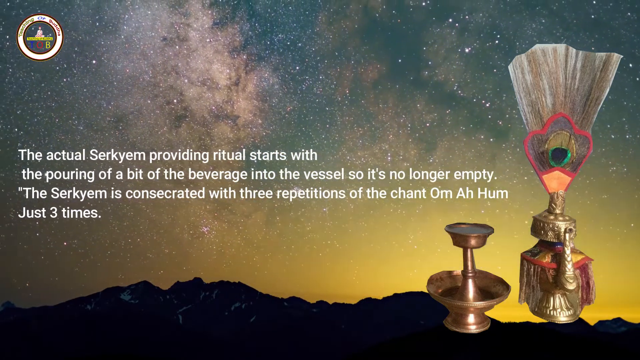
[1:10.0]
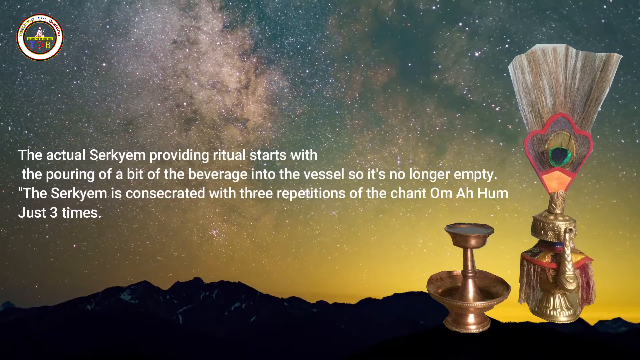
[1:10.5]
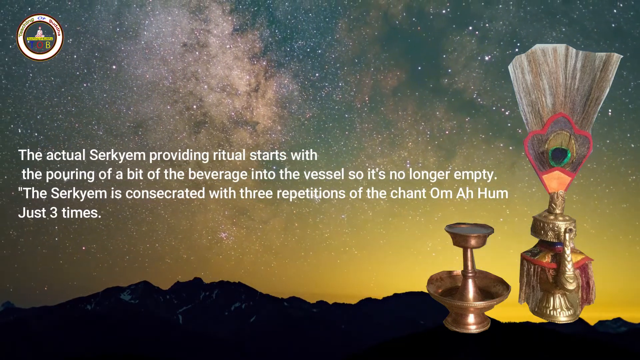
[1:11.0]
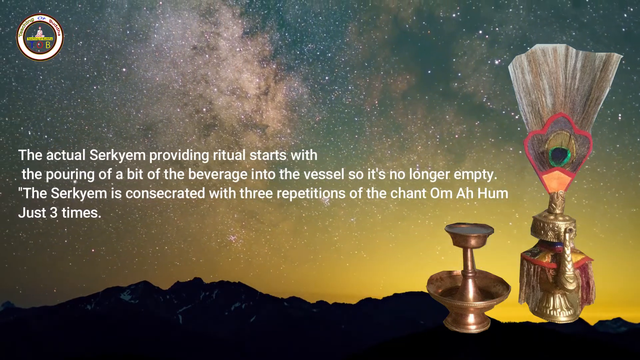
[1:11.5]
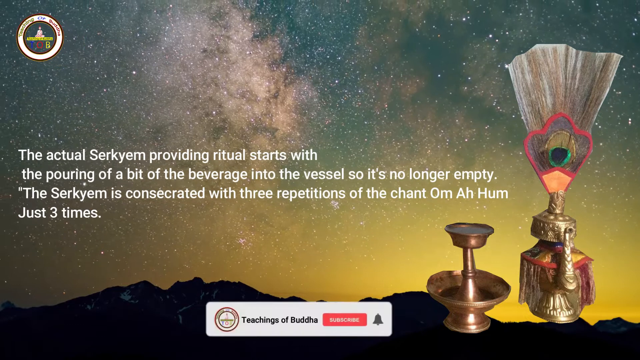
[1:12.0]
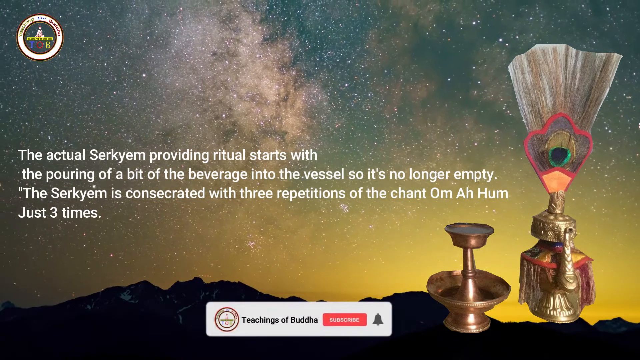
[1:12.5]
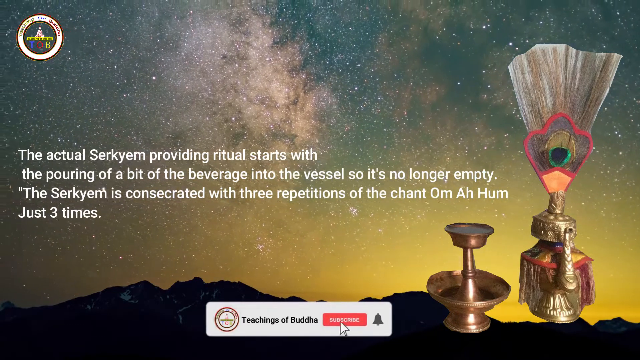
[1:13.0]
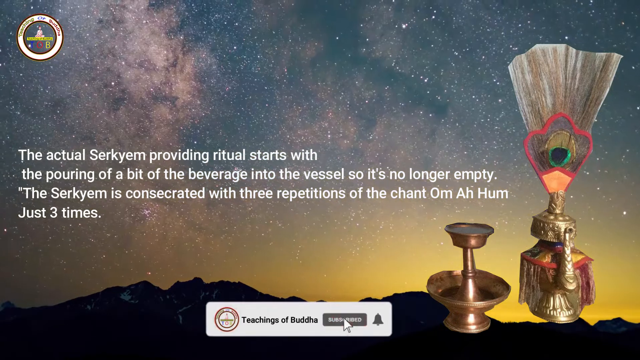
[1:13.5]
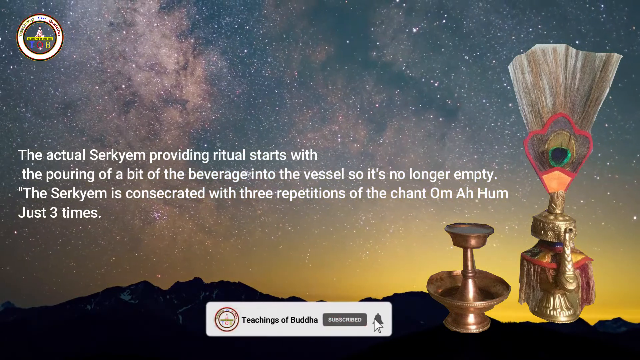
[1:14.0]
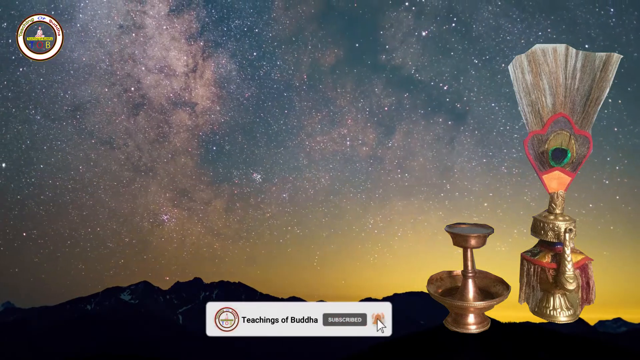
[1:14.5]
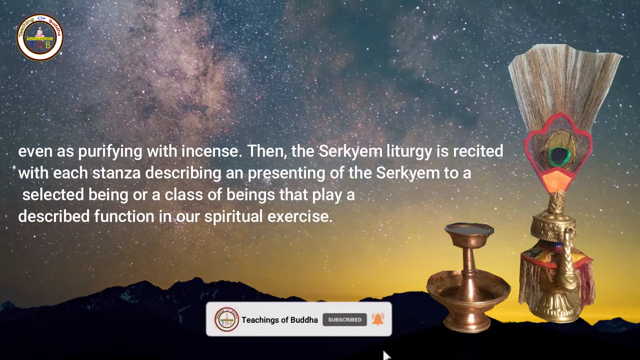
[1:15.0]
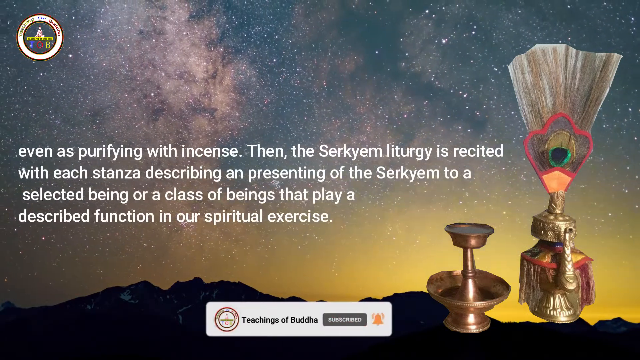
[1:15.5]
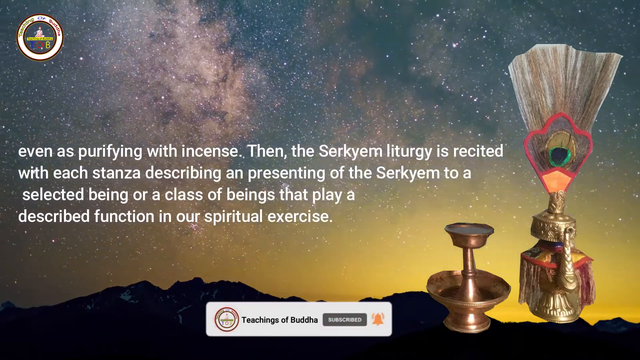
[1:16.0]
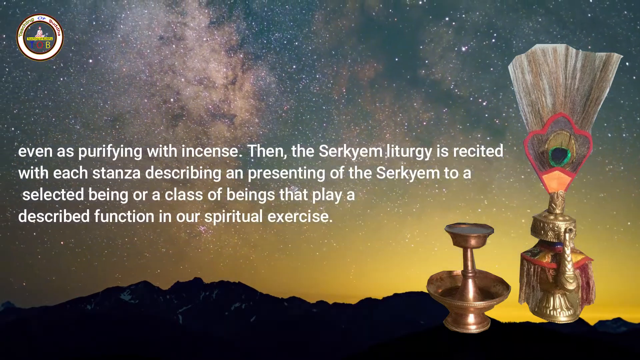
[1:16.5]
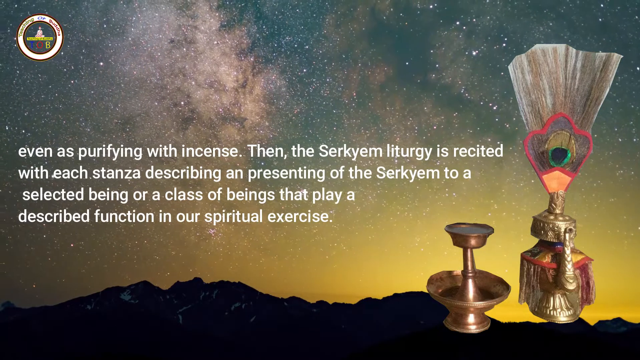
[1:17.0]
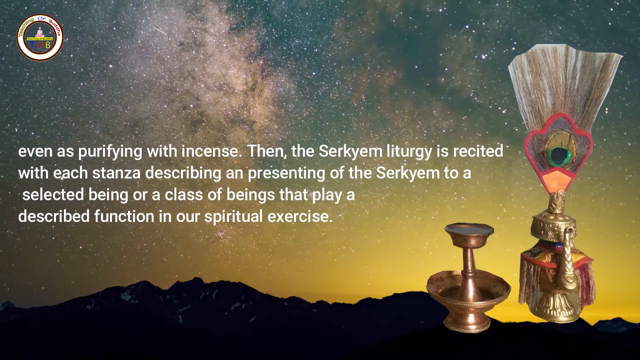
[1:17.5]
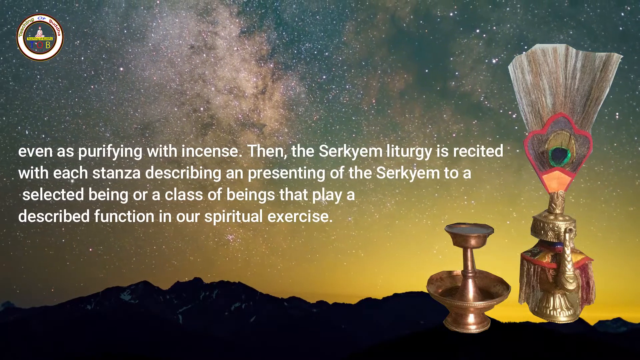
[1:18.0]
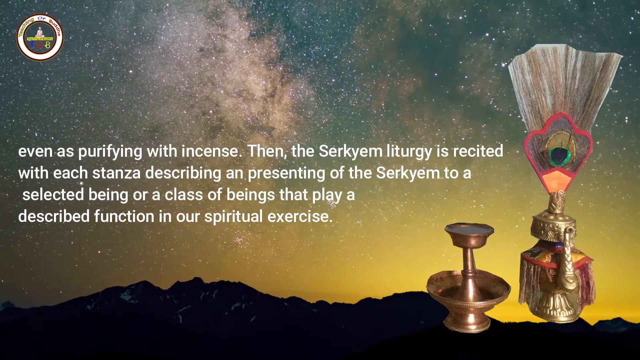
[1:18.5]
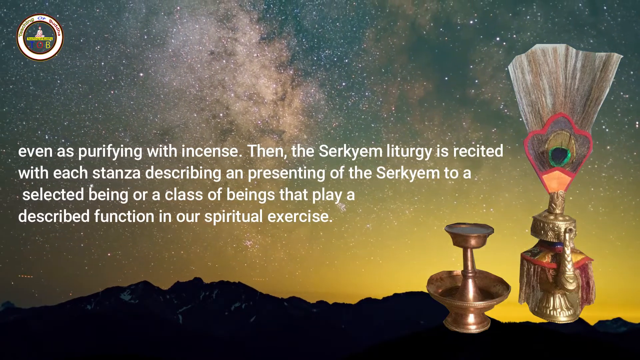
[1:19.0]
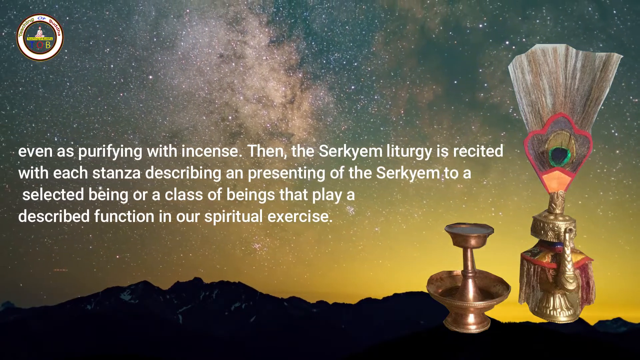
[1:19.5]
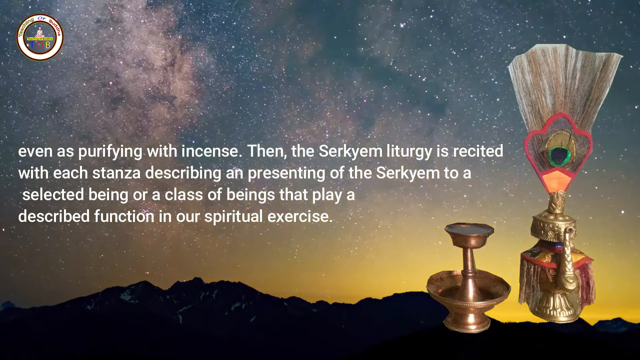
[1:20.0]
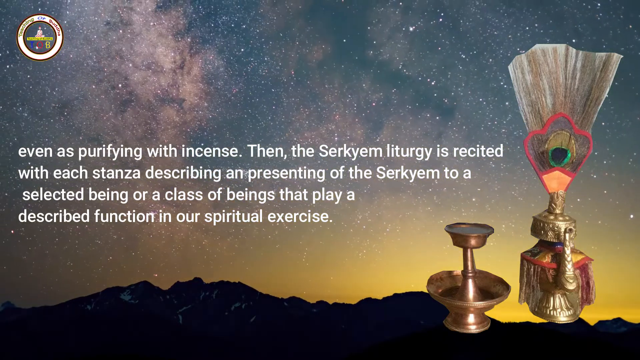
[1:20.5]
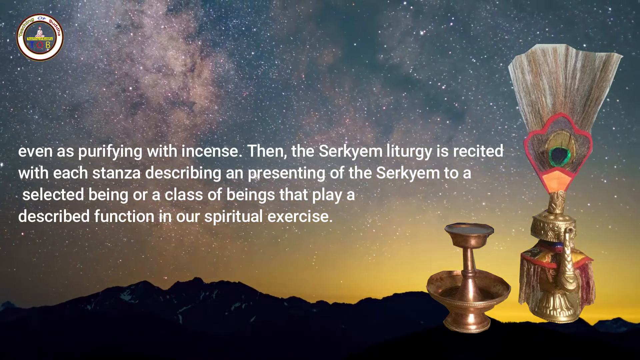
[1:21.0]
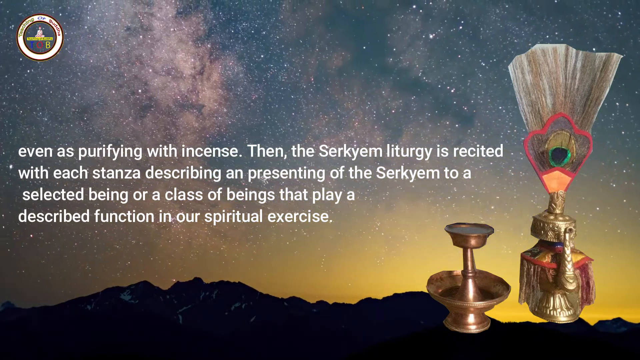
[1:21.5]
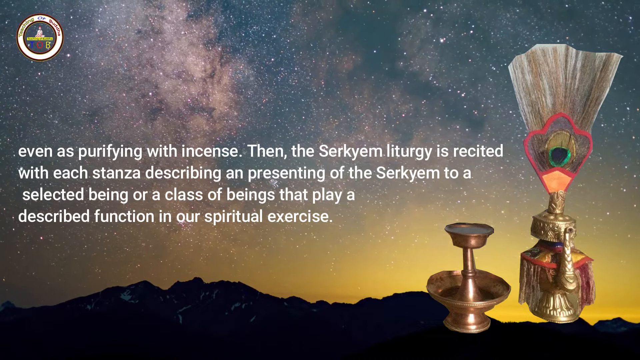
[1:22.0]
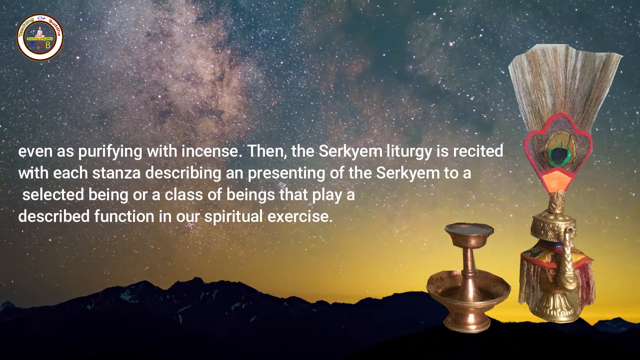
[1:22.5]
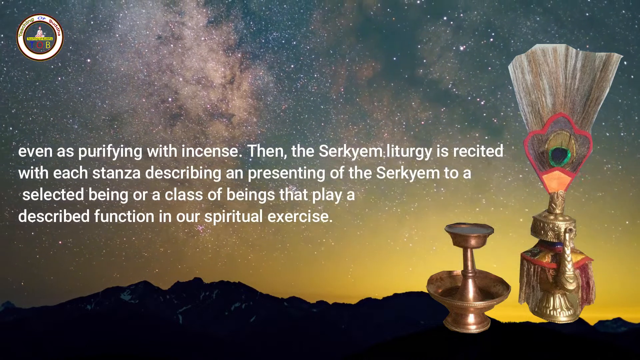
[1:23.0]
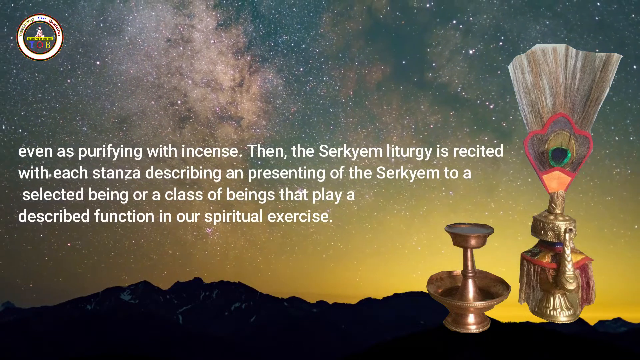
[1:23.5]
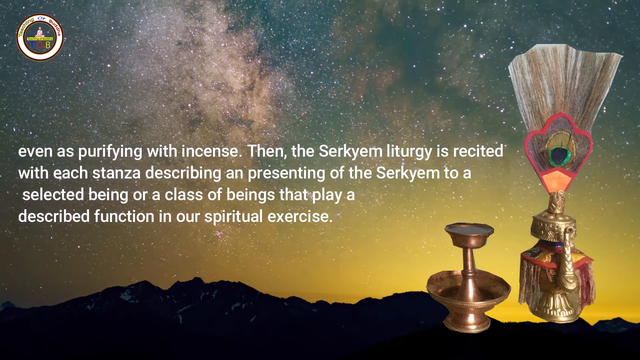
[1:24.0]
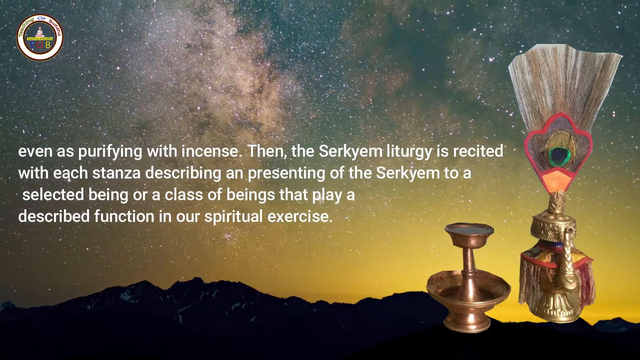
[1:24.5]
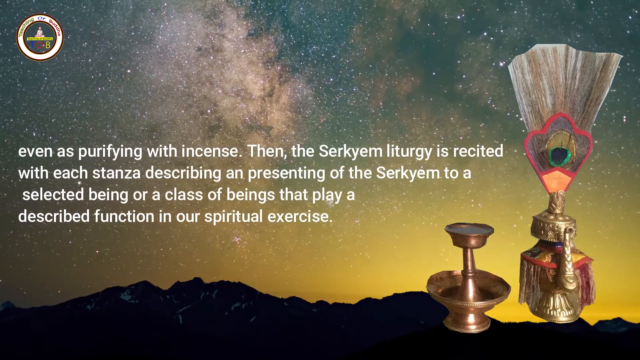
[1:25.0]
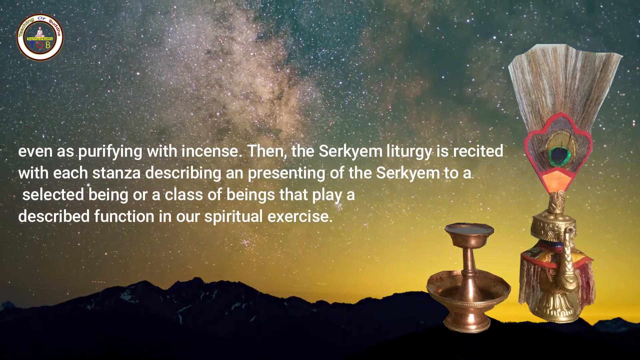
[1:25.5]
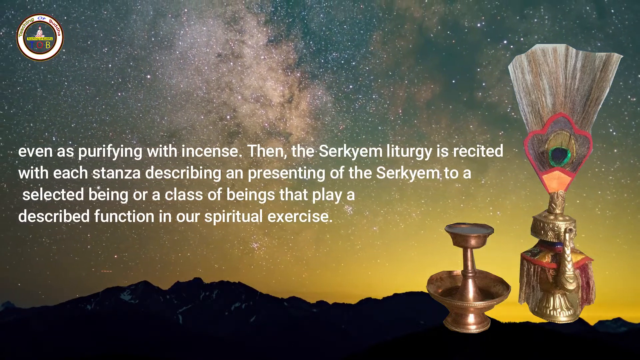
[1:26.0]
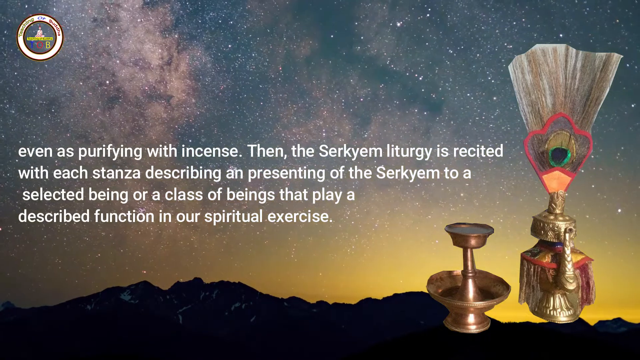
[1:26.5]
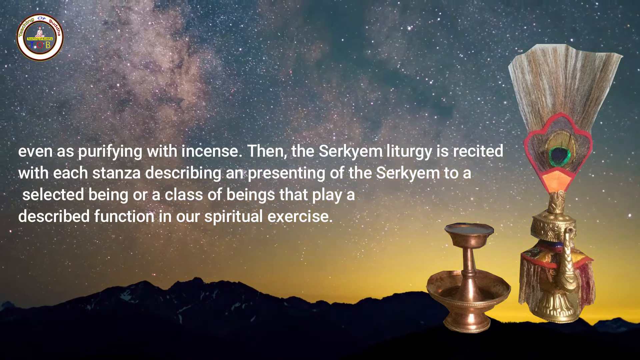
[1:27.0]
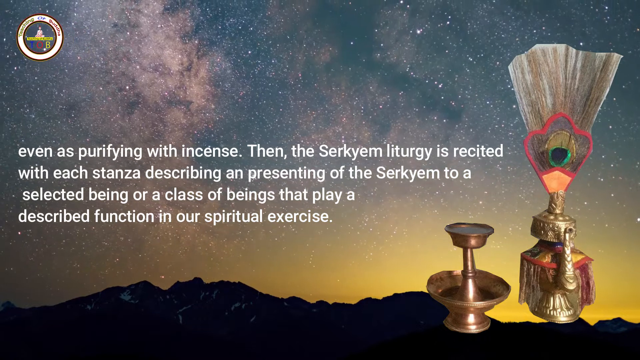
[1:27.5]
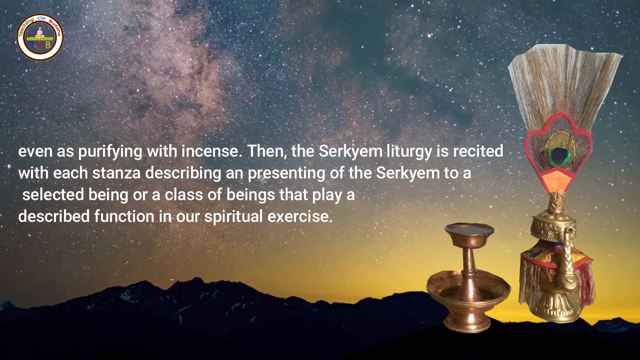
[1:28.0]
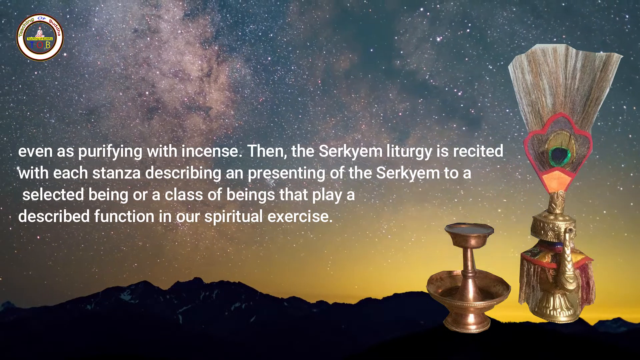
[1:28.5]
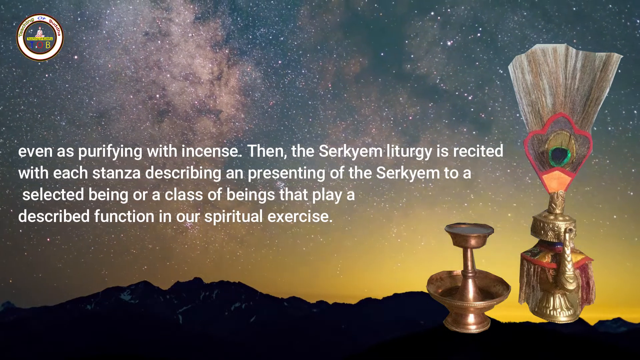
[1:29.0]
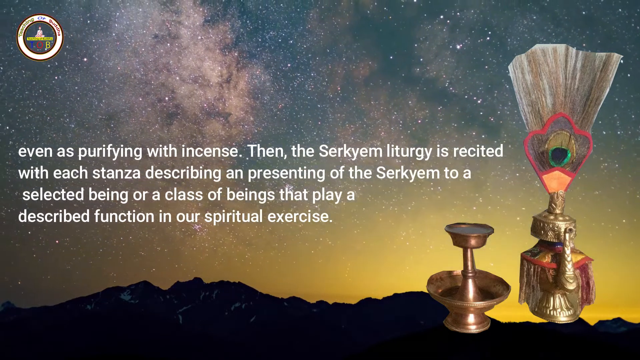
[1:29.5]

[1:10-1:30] The text changes to about four evenly spaced white lines, reading "even as purifying with incense," followed by text saying the Circium liturgy "is recited with each stanza, describing and presenting of the Circium to a selected being or a class of beings." The text then stays on the same clause for quite some time. Only the night sky changes: it moves to the right, shooting stars appear at some moments and not at others, and the glow around the mountain range is sometimes dark yellow and sometimes light yellow. Everything else remains the same.